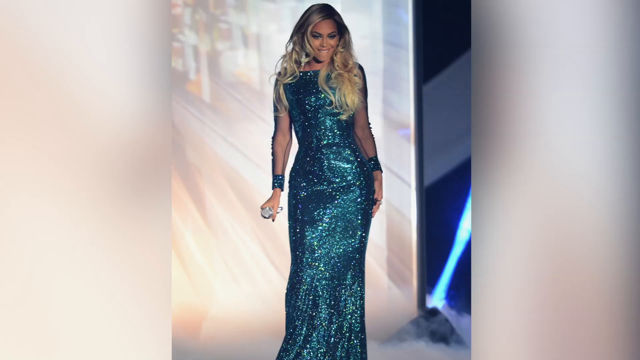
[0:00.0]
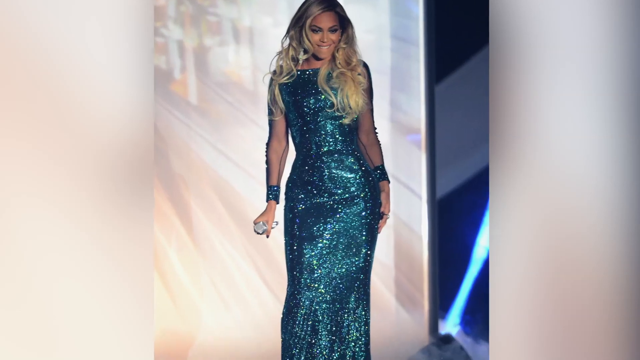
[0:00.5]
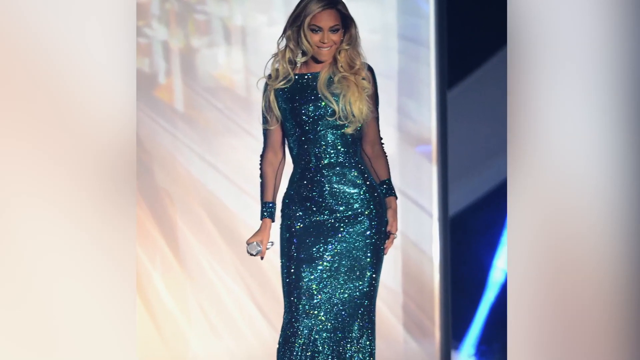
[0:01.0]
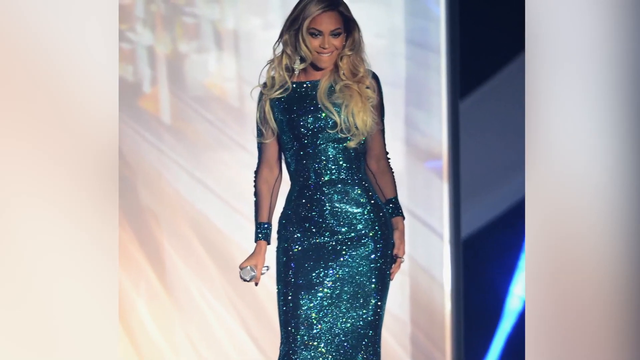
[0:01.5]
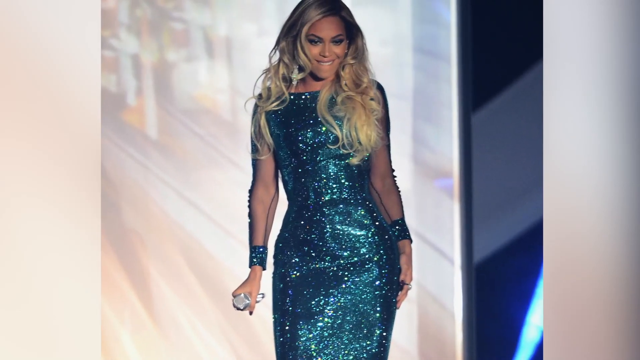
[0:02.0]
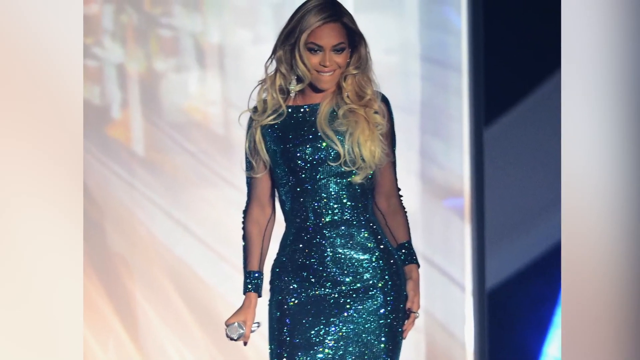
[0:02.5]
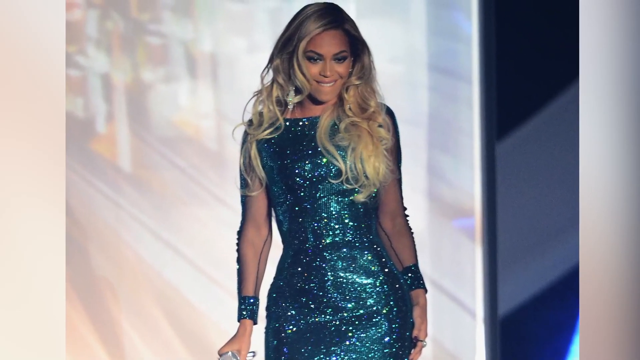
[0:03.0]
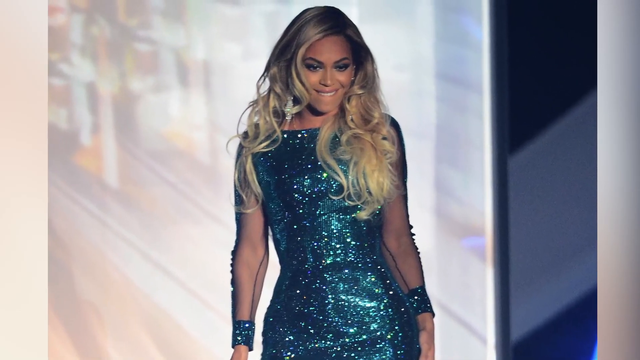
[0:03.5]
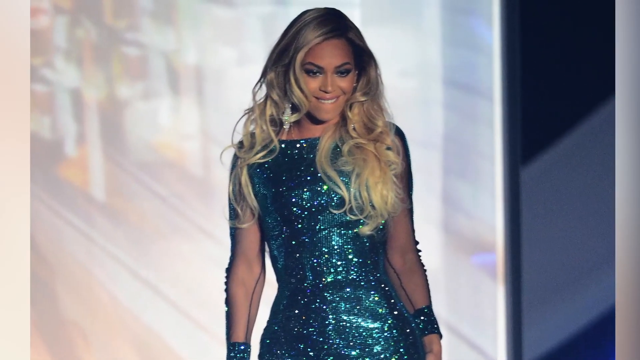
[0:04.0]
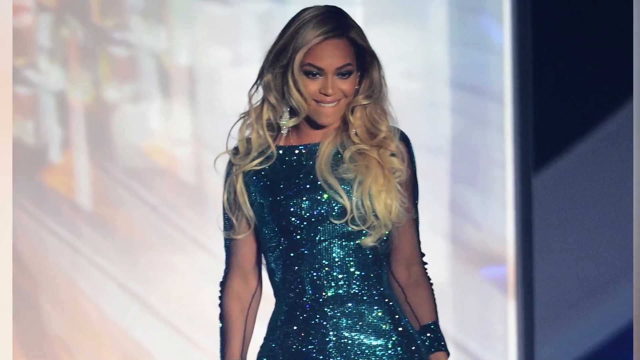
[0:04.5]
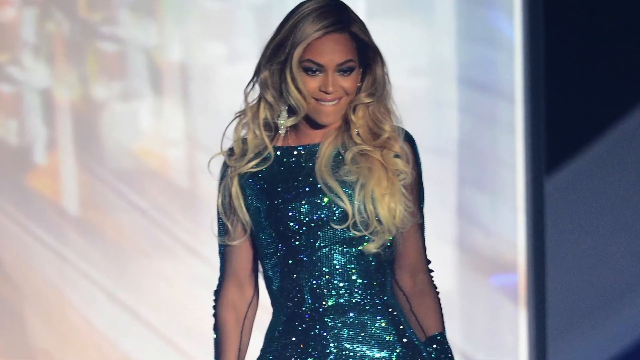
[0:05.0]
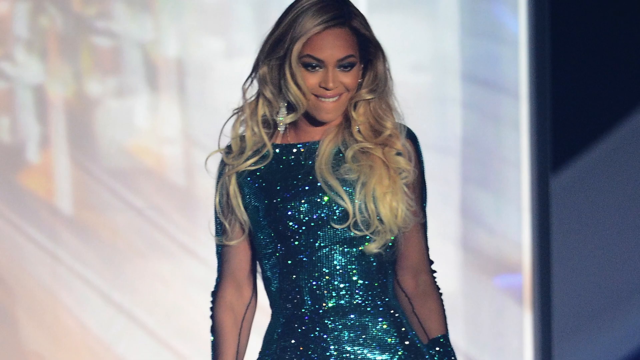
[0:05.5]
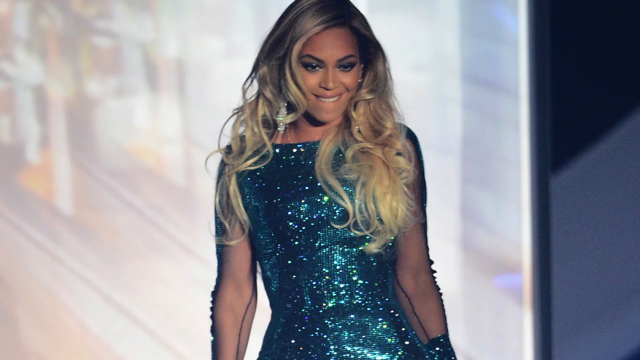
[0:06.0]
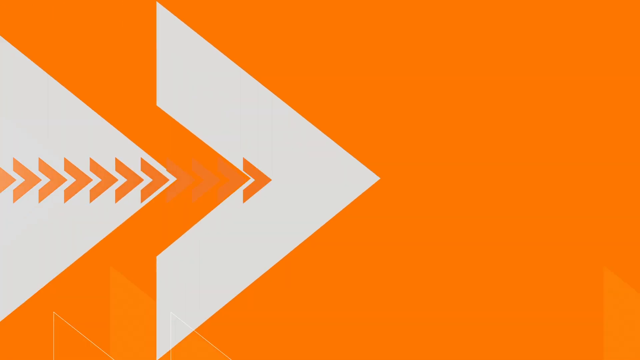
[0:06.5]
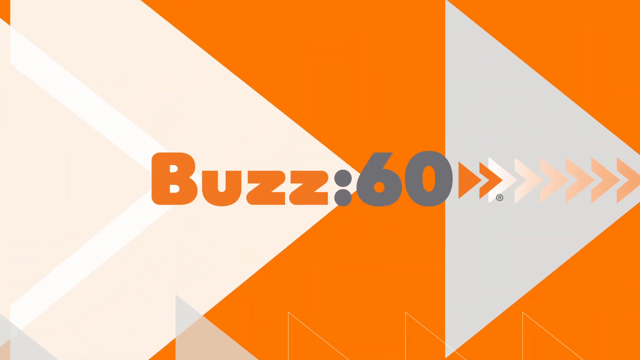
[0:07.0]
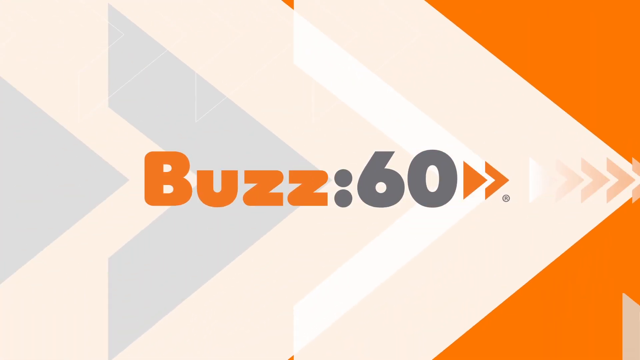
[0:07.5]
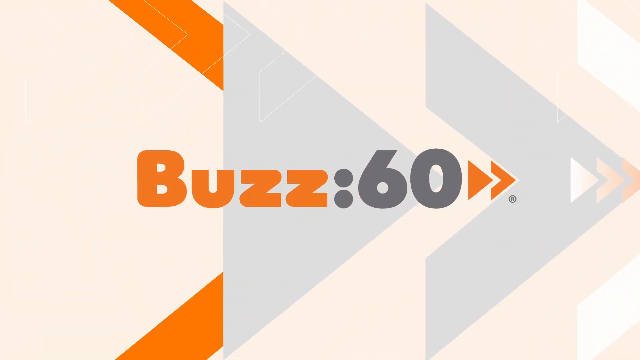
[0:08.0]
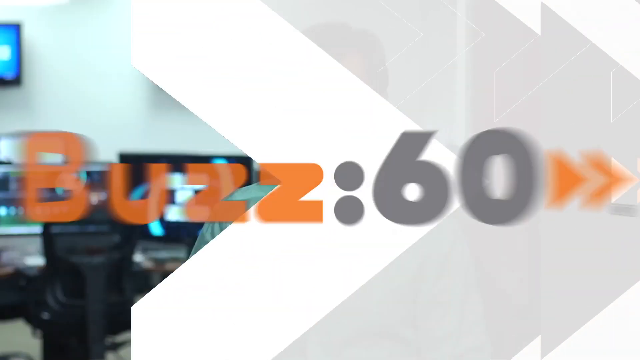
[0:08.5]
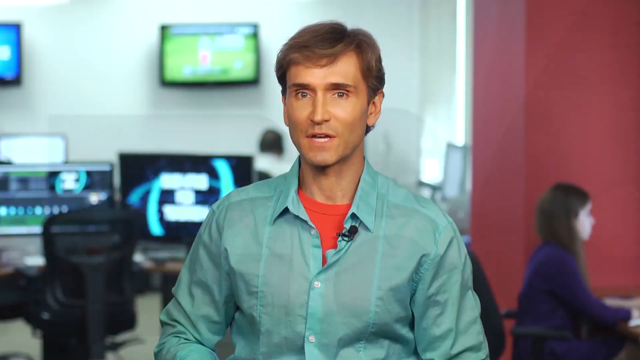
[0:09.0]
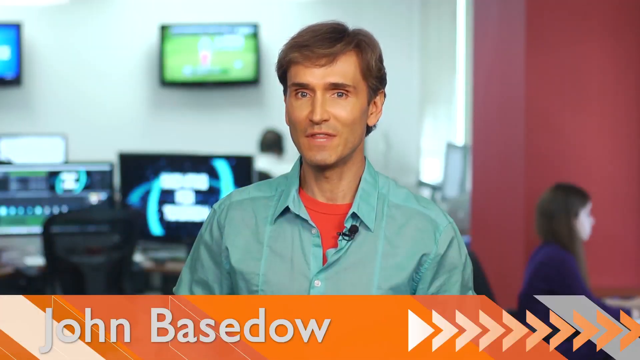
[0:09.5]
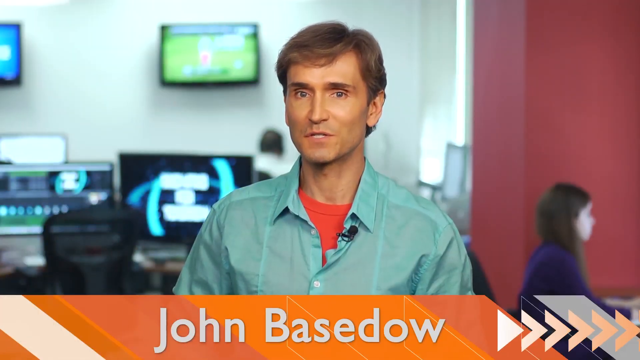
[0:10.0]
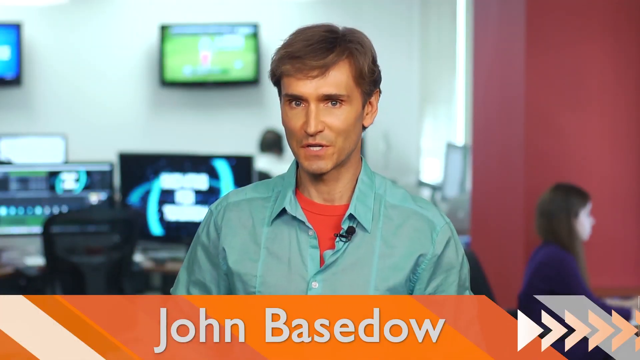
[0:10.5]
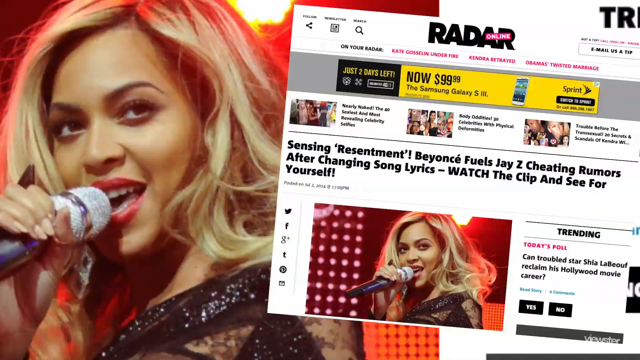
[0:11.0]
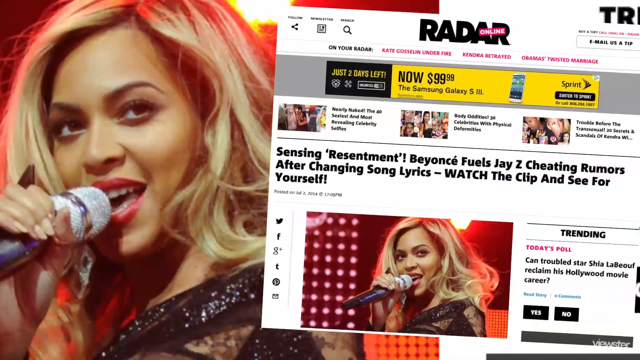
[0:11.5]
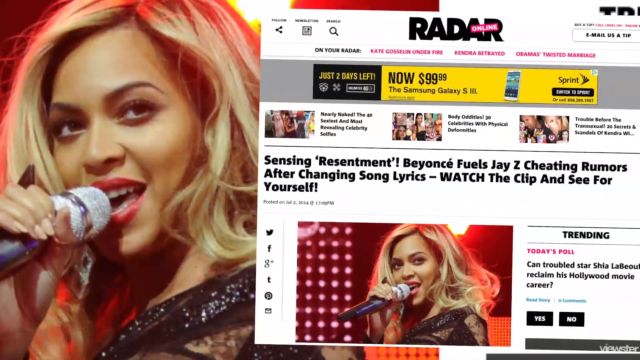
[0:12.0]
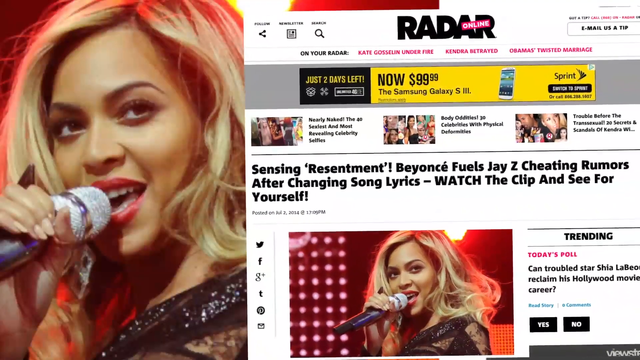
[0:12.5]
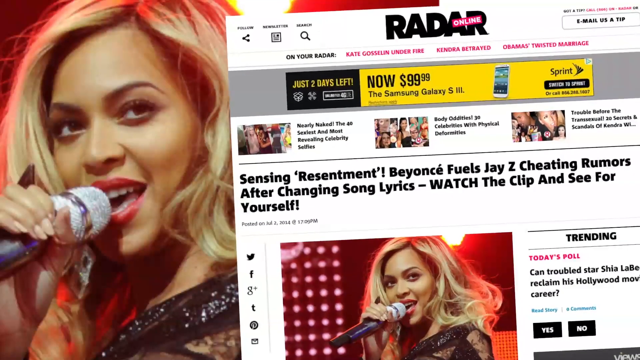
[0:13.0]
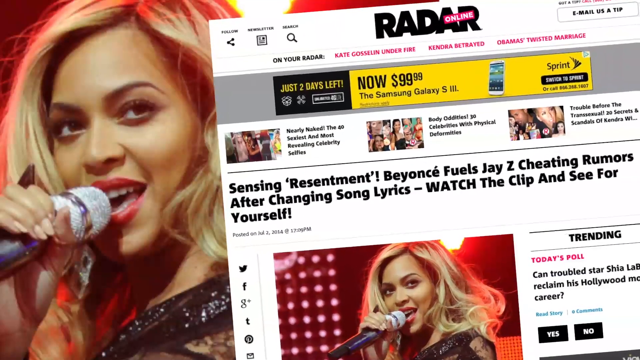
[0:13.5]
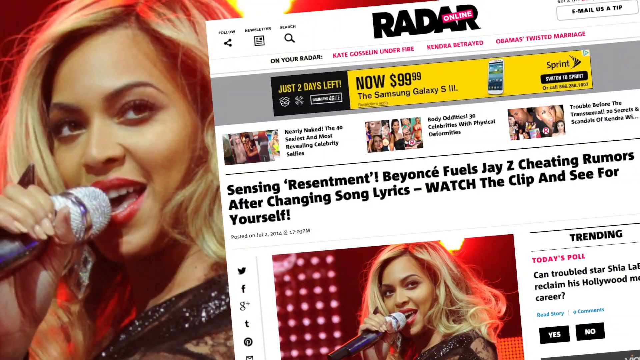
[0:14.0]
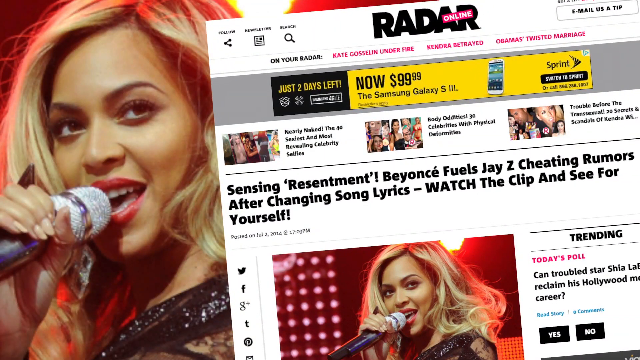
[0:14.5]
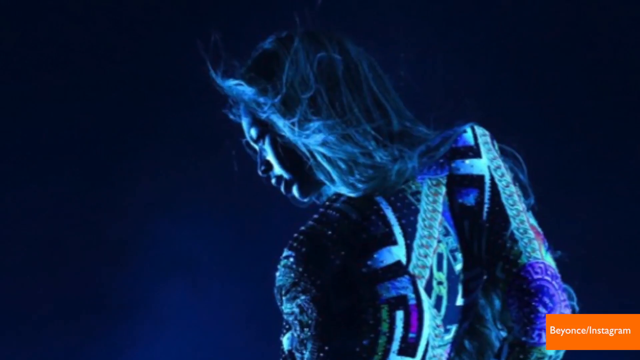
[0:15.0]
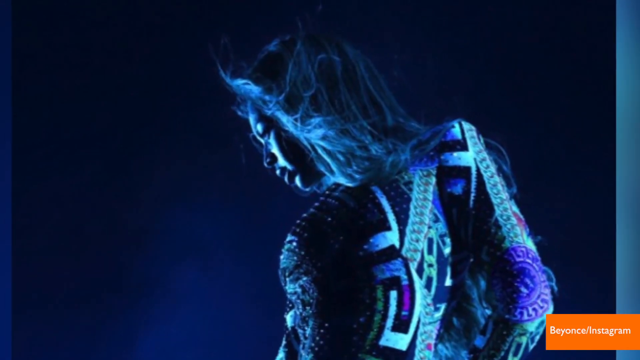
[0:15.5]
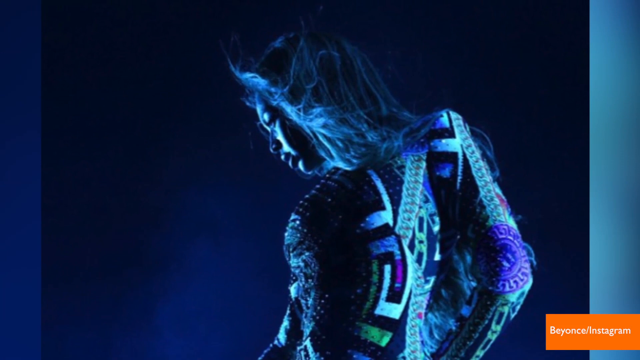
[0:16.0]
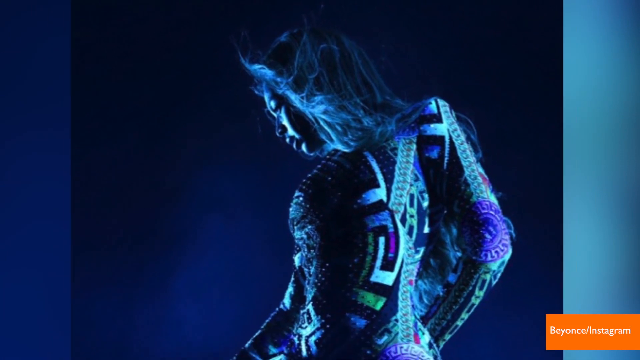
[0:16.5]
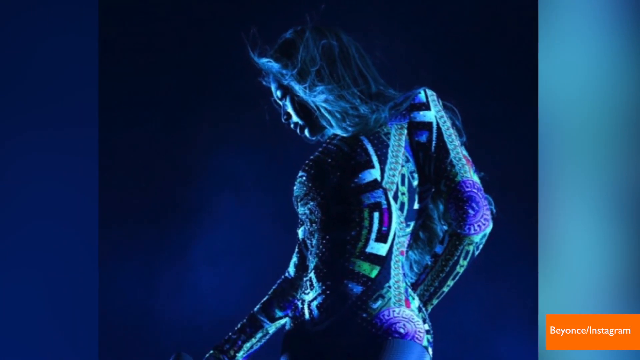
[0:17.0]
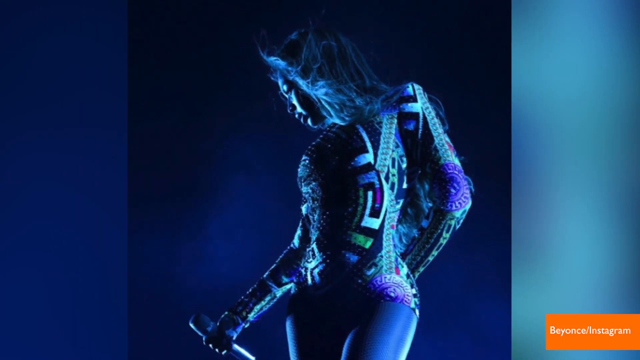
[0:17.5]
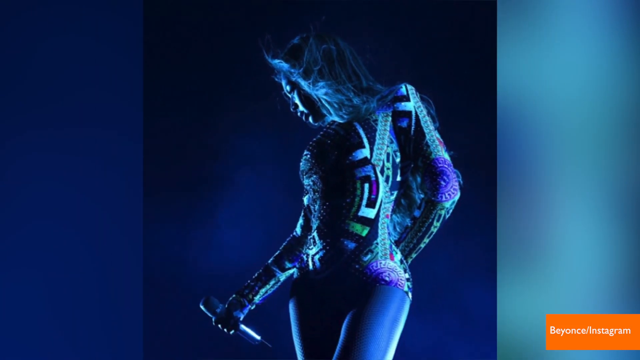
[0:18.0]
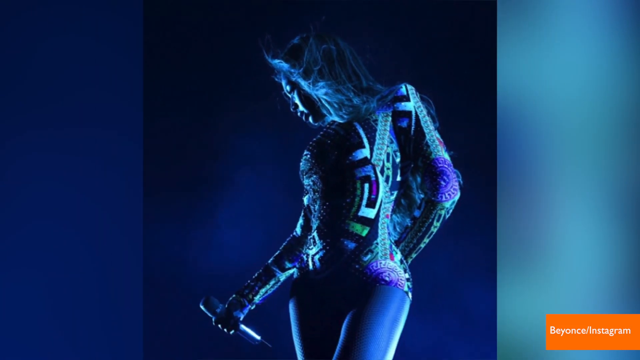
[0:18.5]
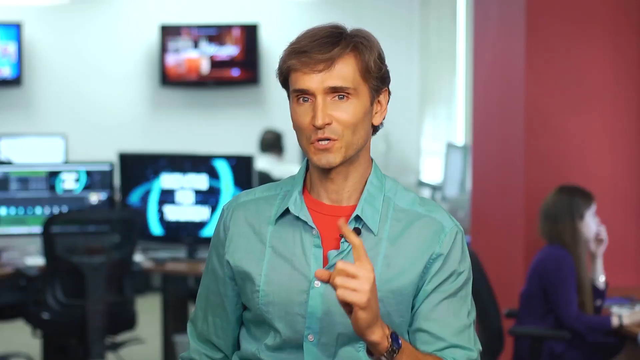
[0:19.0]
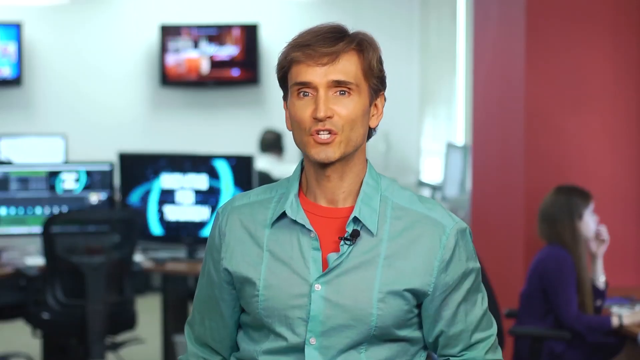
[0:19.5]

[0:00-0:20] A photo shows Beyonce on stage somewhere, kind of biting her lips. The video cuts to an intro reading "buzz 60" with arrows pointing to the right side of the screen. The name "John Bay" appears at the bottom, identifying the reporter, who wears a light green dress shirt with red underneath and stares at the camera as he talks. The video then cuts to a background with Beyonce on the left-hand side of the screen, while the right-hand side shows an article from a news source called radar, with "radar" in giant black font and "online" in sort of pink text inside a purple rectangle. The article's title reads "Sensing Resentment, Beyonce Feels Jay-Z Cheating Rumors." The article takes up a portion of the screen, where it rotates to the left-hand side.